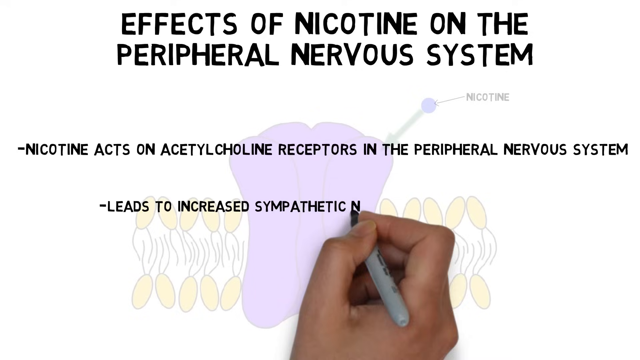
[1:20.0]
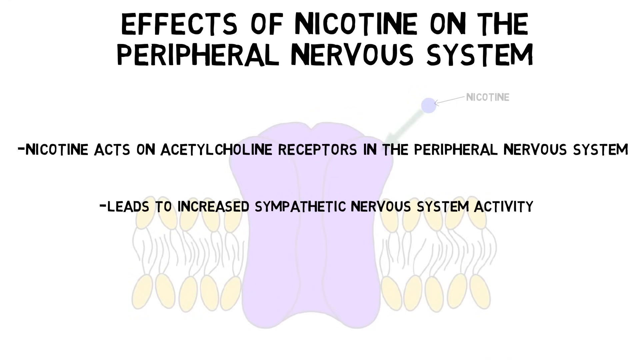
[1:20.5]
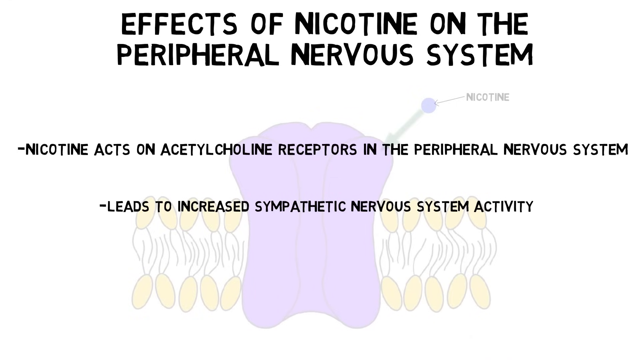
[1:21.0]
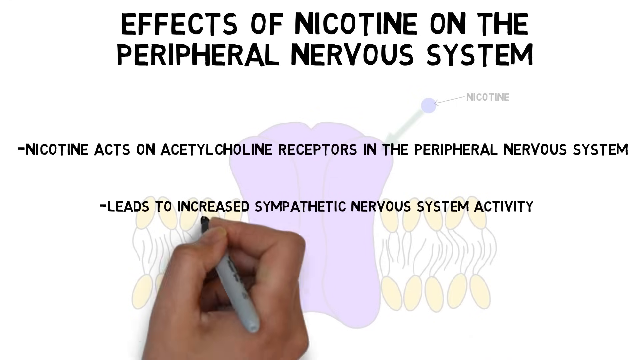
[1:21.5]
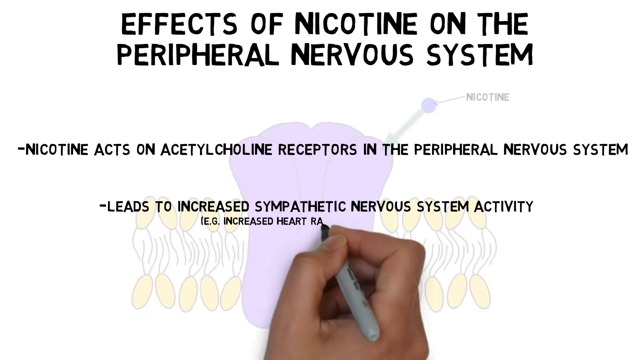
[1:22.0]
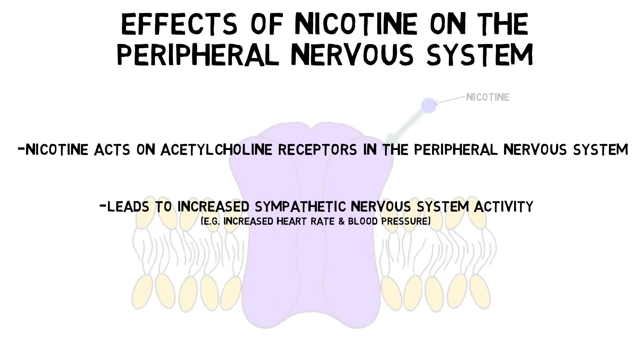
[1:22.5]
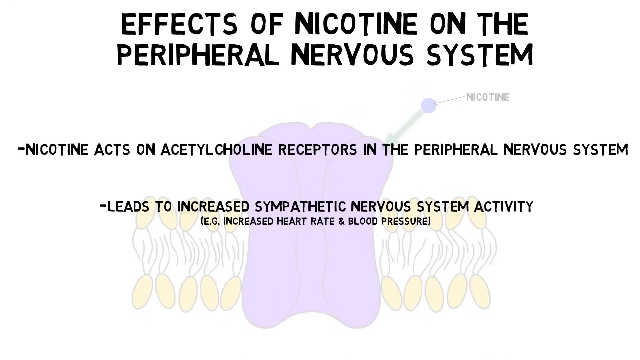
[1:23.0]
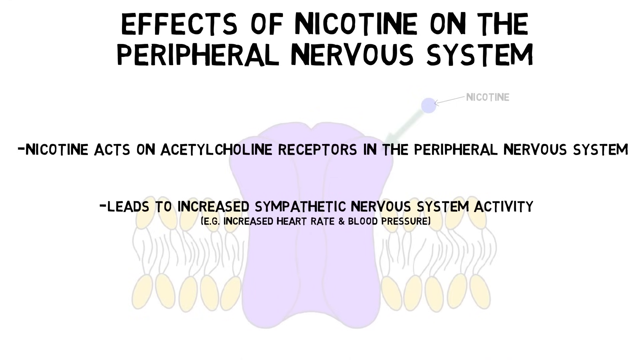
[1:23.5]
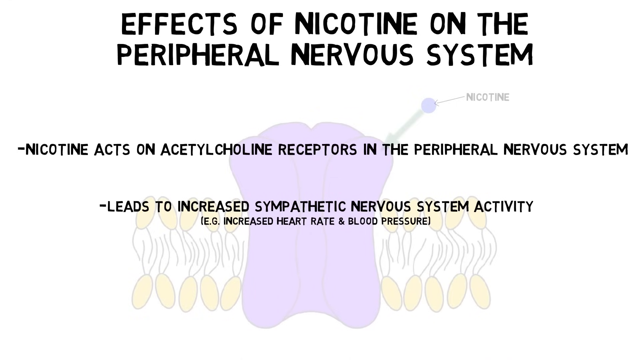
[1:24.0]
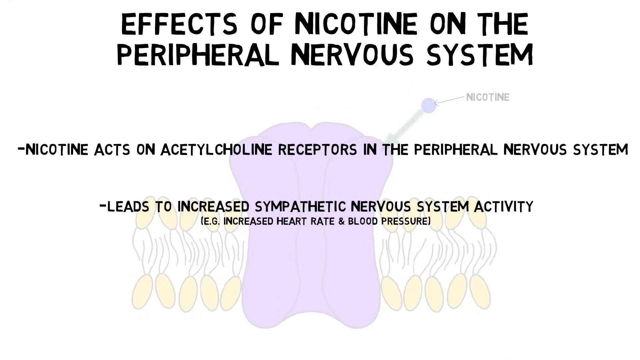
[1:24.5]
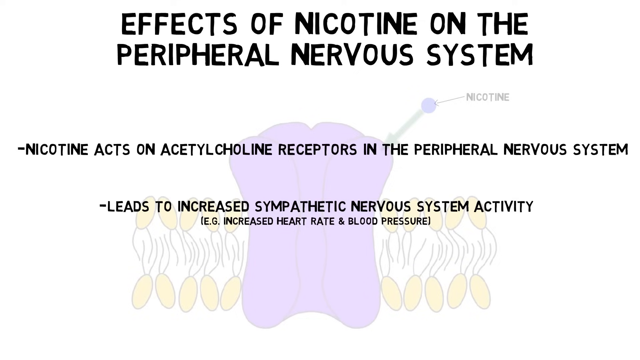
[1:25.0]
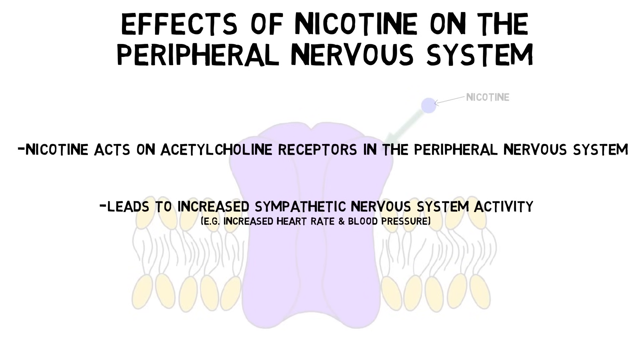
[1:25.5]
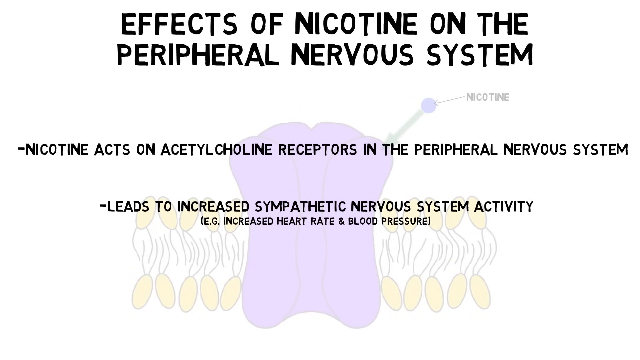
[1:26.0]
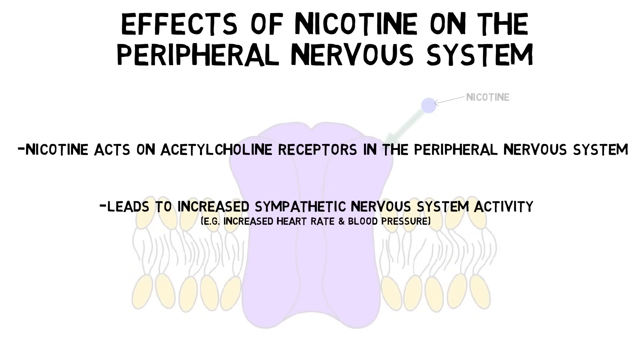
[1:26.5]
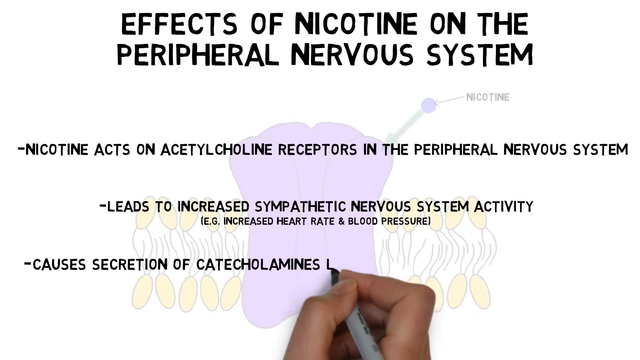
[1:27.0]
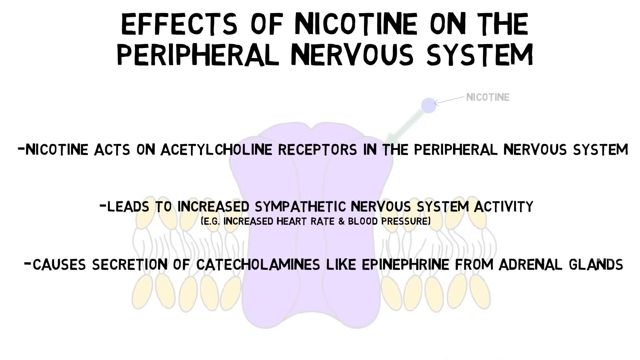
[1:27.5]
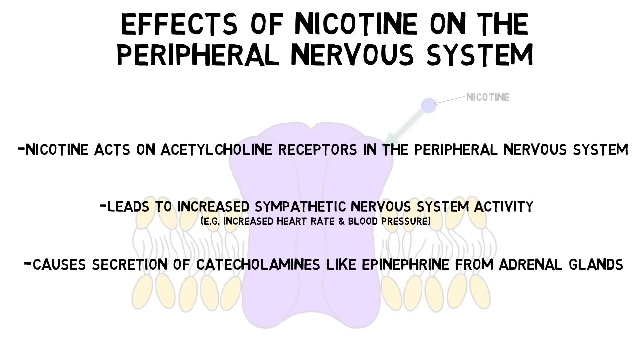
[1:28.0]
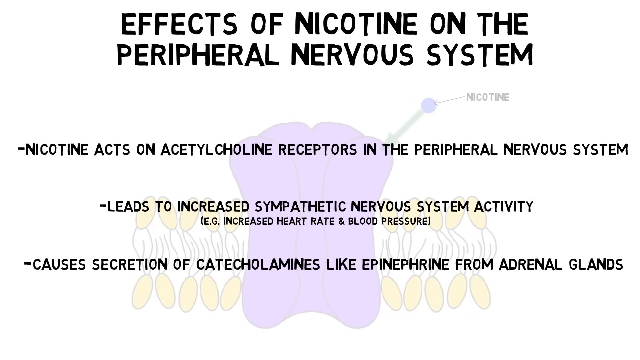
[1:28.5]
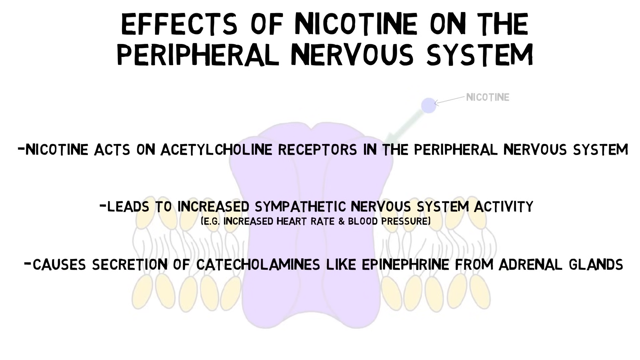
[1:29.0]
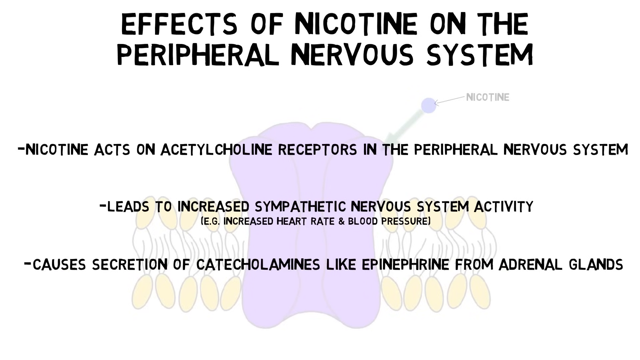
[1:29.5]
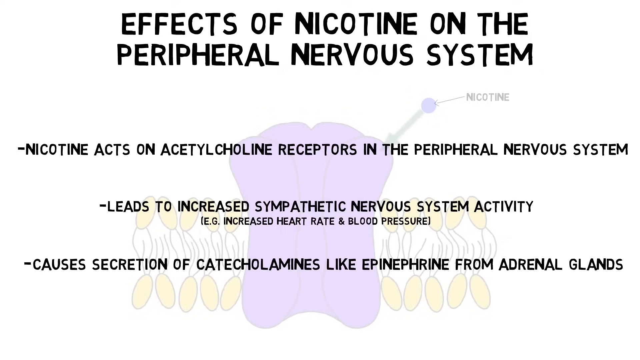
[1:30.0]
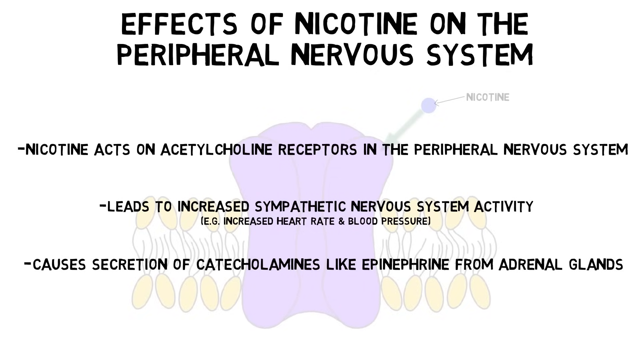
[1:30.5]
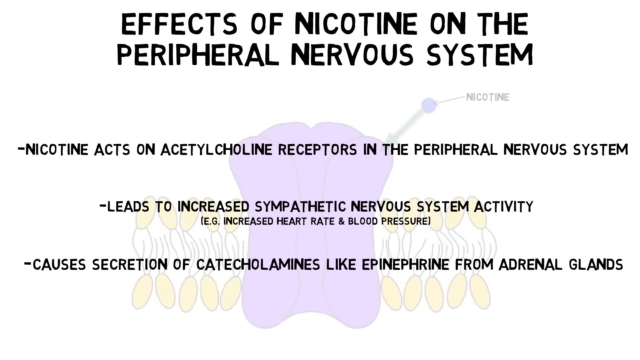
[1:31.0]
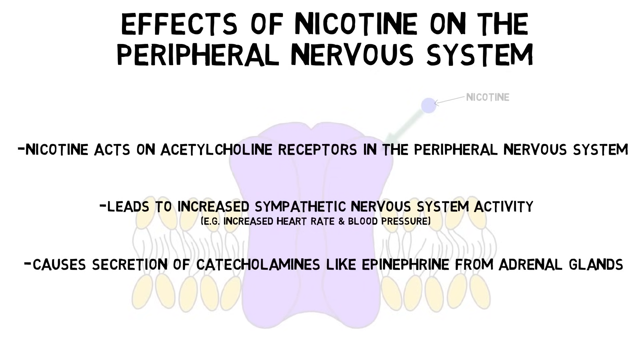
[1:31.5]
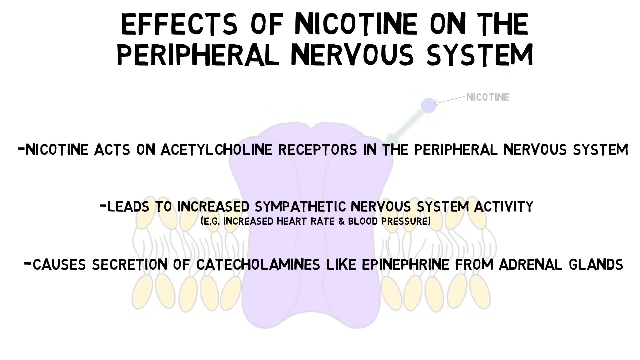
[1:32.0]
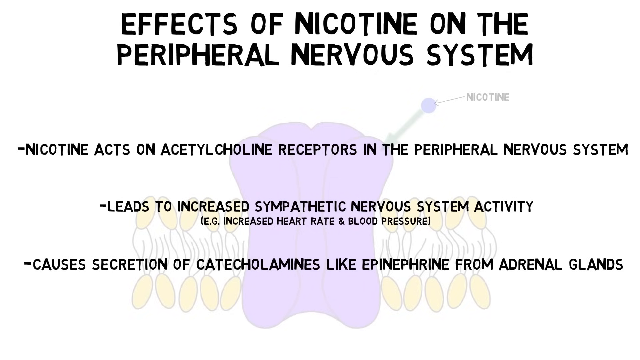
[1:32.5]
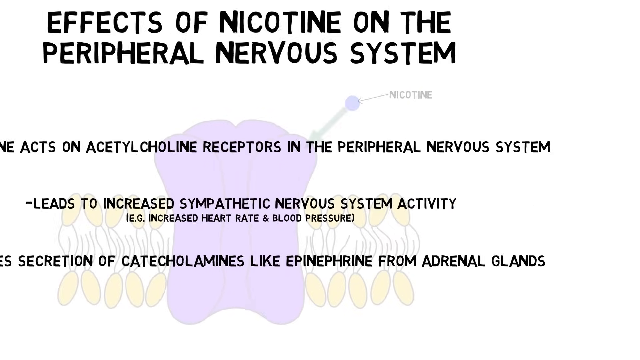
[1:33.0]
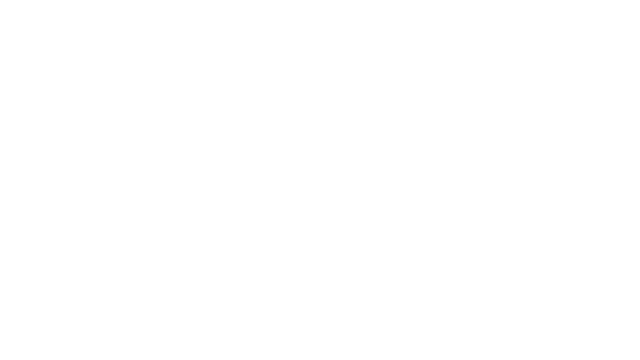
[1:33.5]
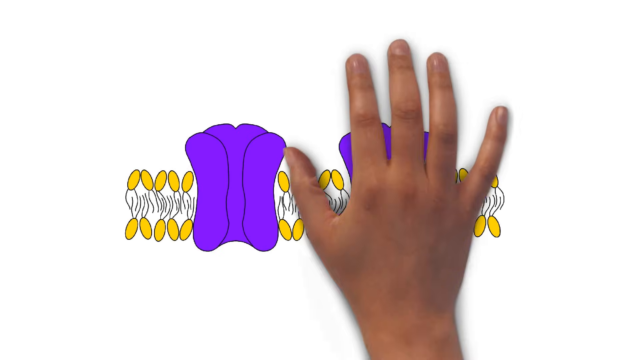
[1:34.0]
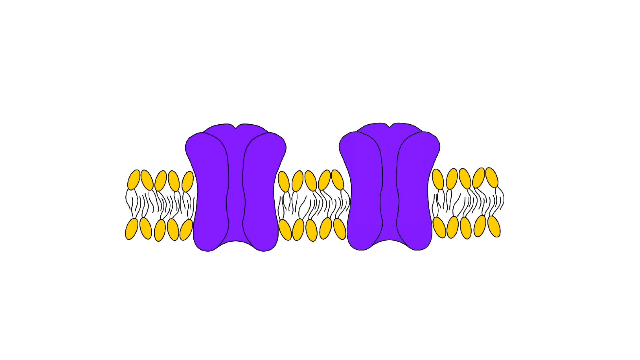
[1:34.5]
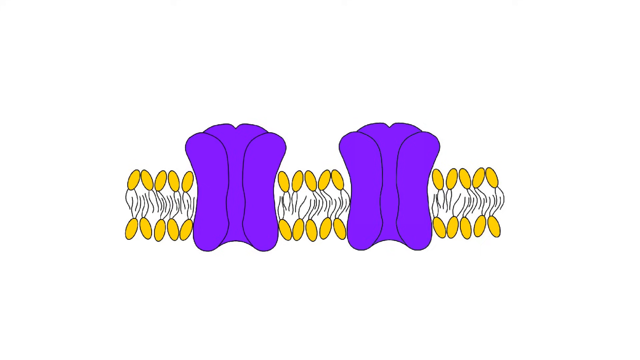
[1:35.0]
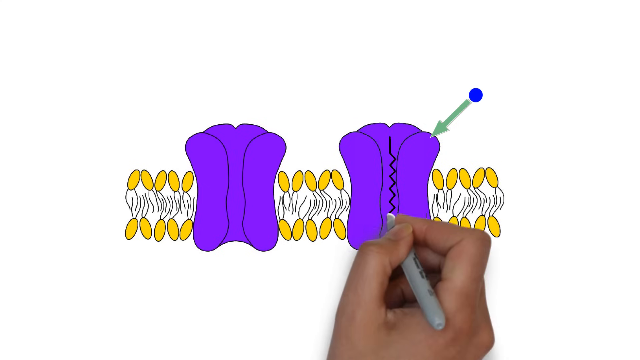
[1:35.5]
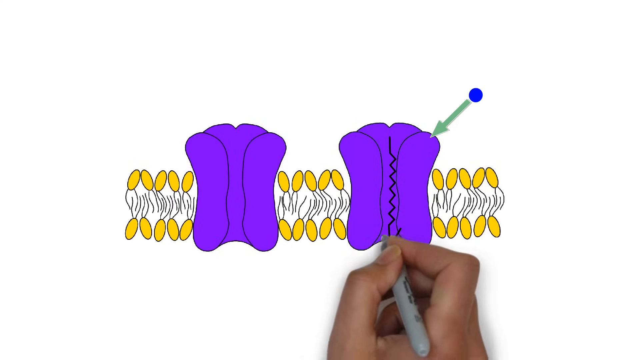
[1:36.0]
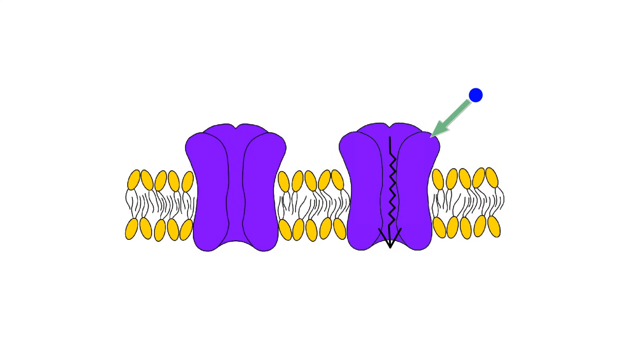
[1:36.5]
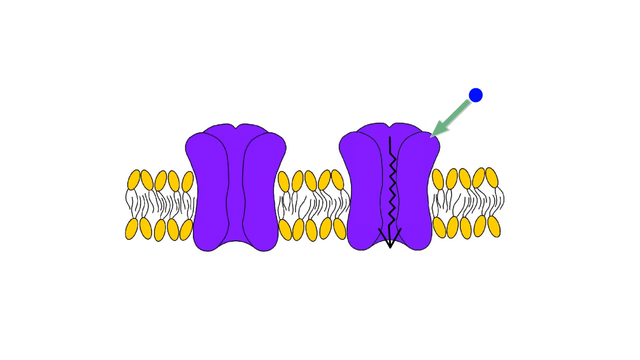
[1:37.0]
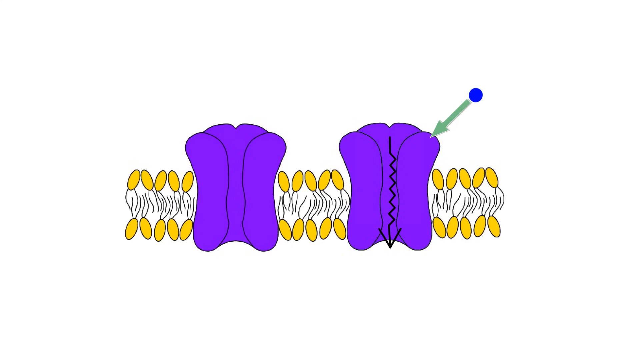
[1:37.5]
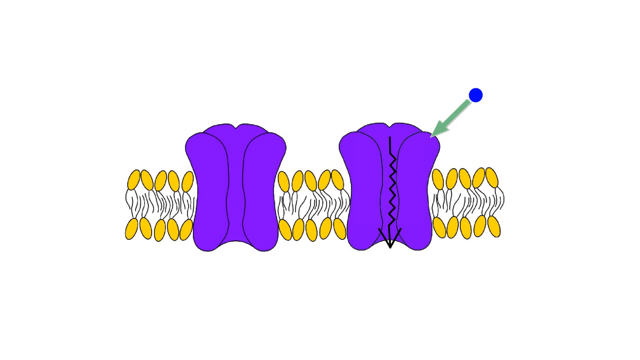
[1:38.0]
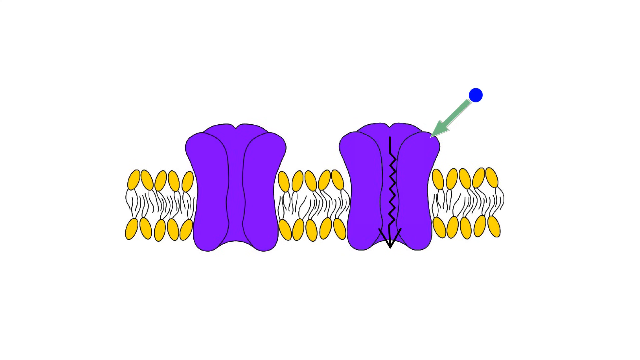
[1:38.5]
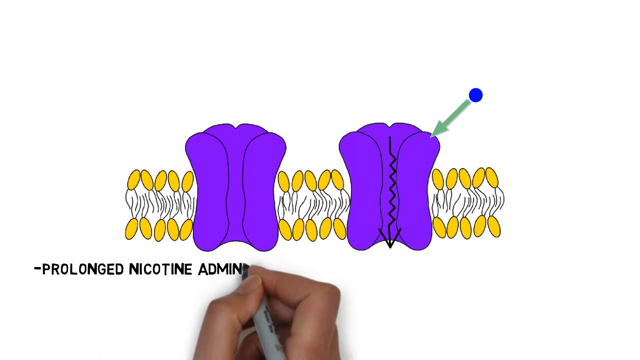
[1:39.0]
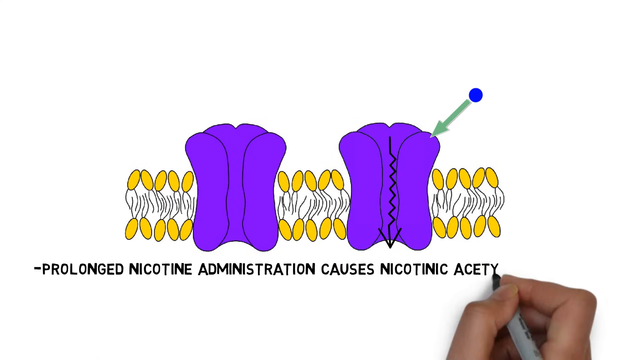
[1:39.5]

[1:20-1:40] The screen titled "effects of nicotine on the peripheral nervous system" has a white background, with the faded diagram still in the background. The hand holding a pen writes a new bulleted list of three points: "nicotine acts on acetylcholine receptors in the peripheral nervous system"; "leads to increased sympathetic nervous system activity (e.g., increased heart rate and blood pressure)"; and "causes secretion of catecholamines like epinephrine from adrenal glands". The scene then shifts to a new one, again with a white background, where the diagram is no longer faded but is smaller, and there are two of the purple, hot-dog-kind-of-shaped images in the middle.